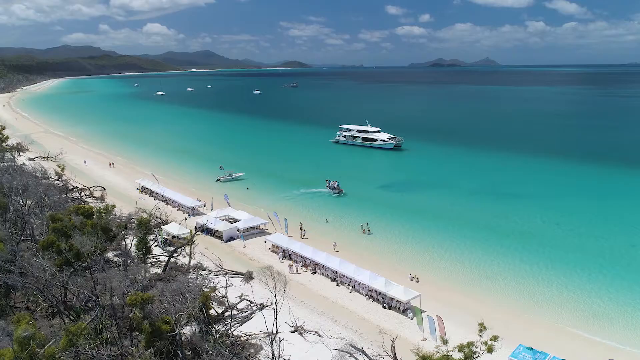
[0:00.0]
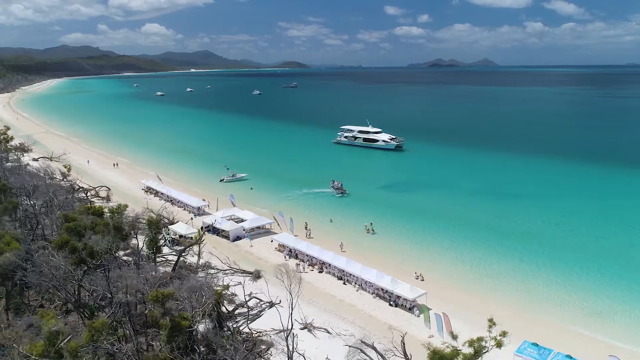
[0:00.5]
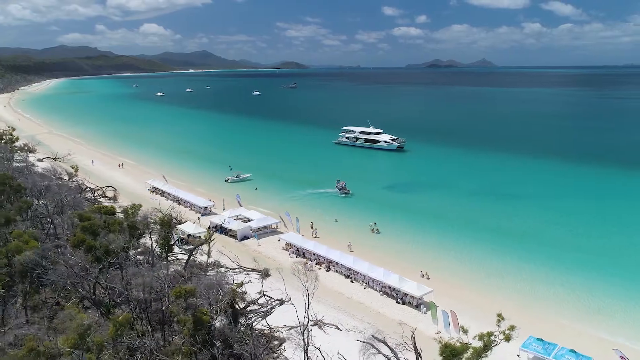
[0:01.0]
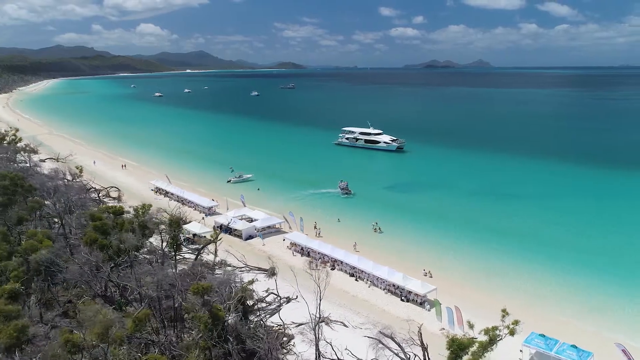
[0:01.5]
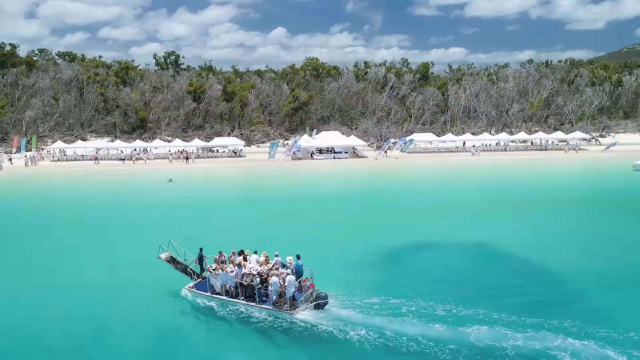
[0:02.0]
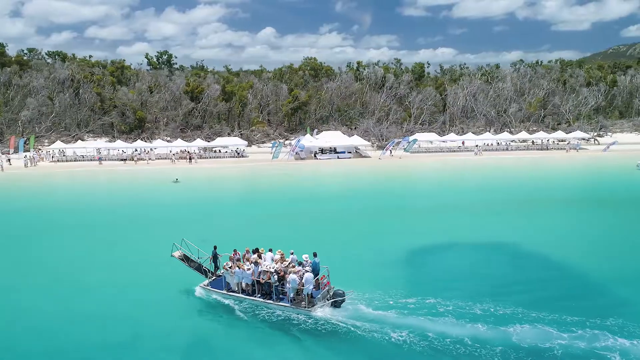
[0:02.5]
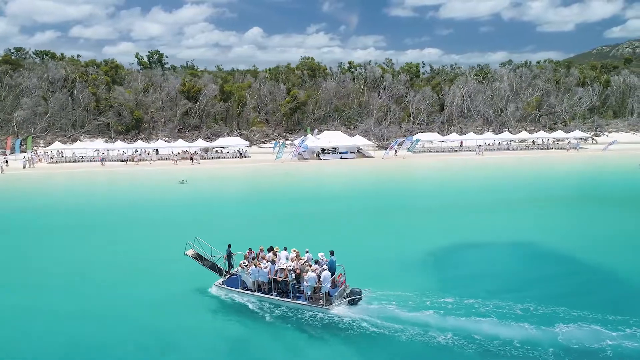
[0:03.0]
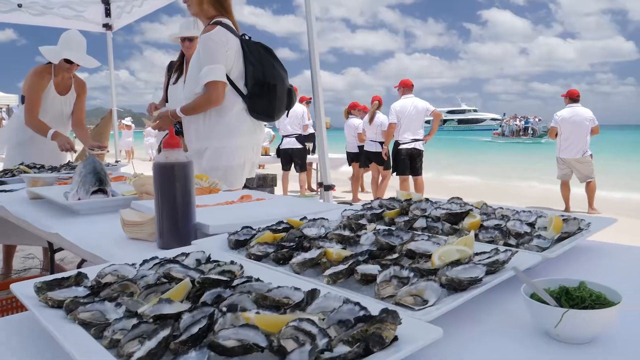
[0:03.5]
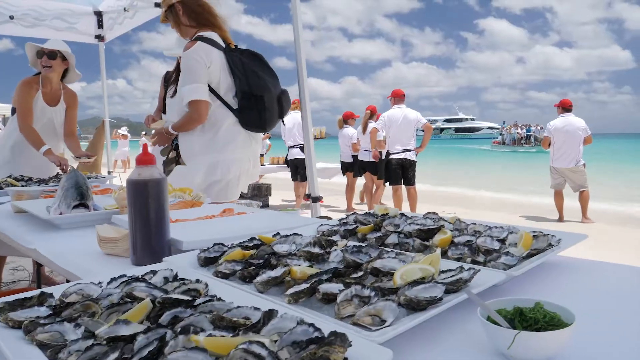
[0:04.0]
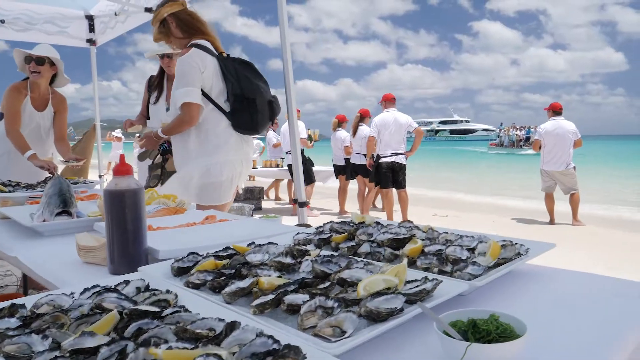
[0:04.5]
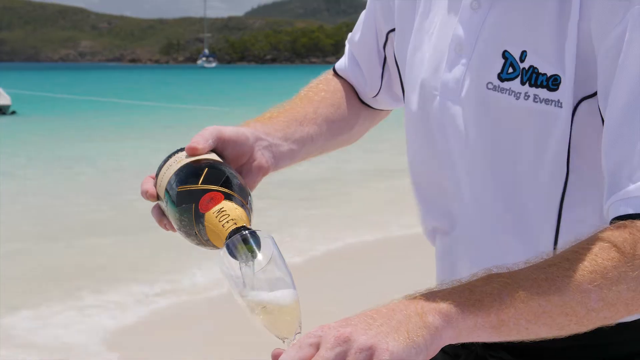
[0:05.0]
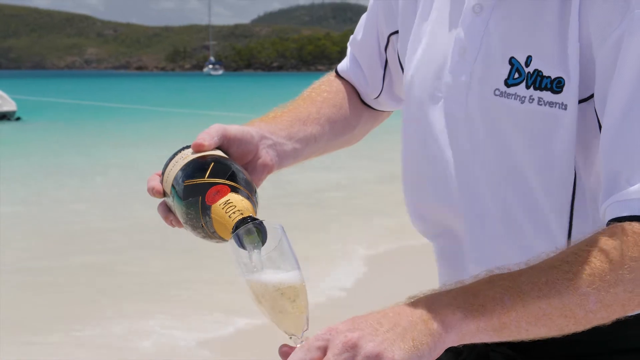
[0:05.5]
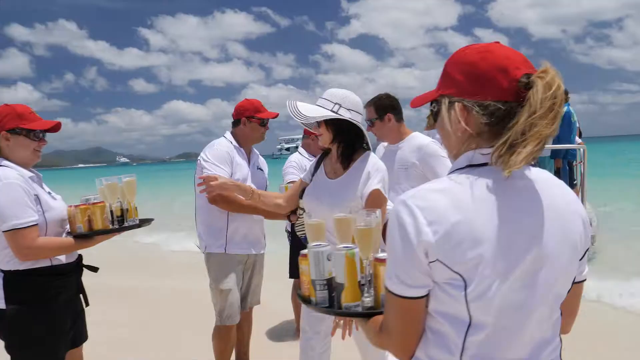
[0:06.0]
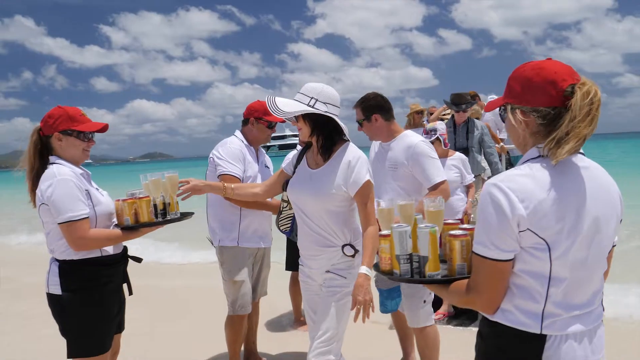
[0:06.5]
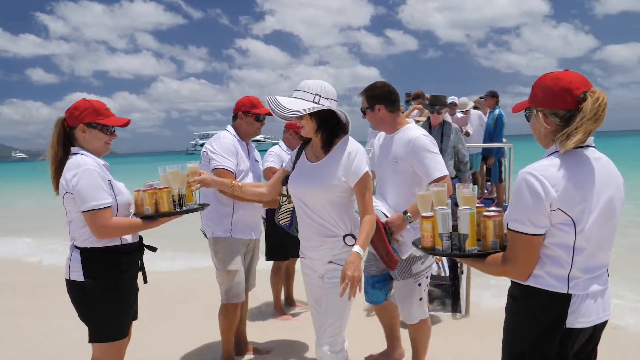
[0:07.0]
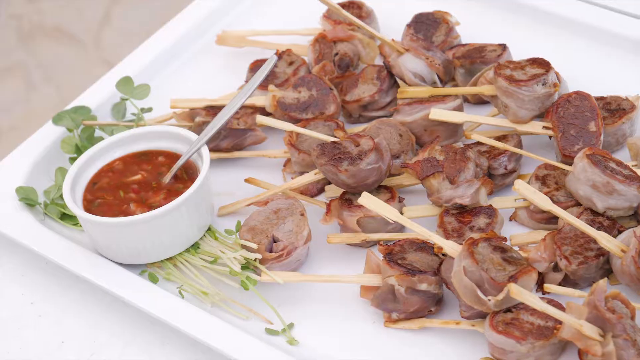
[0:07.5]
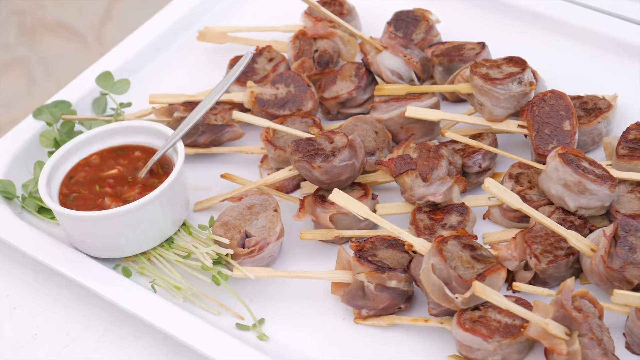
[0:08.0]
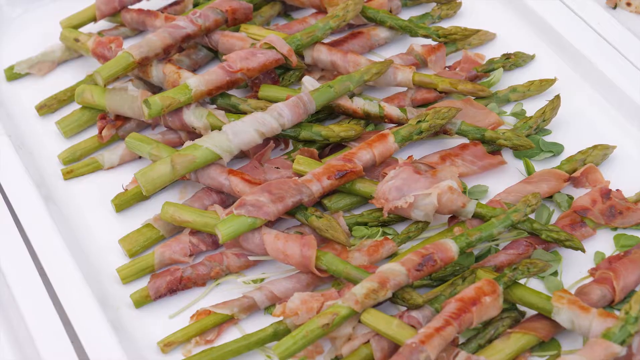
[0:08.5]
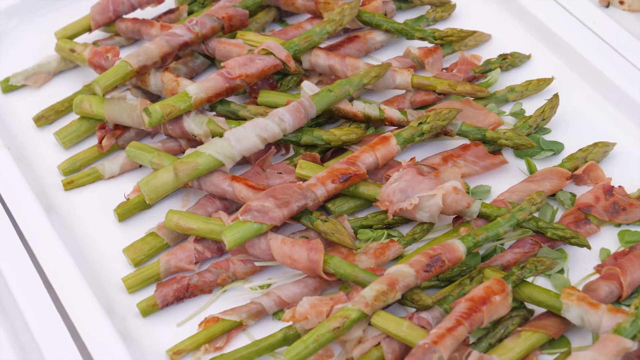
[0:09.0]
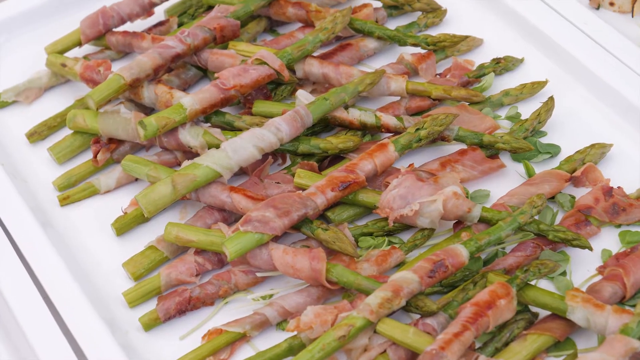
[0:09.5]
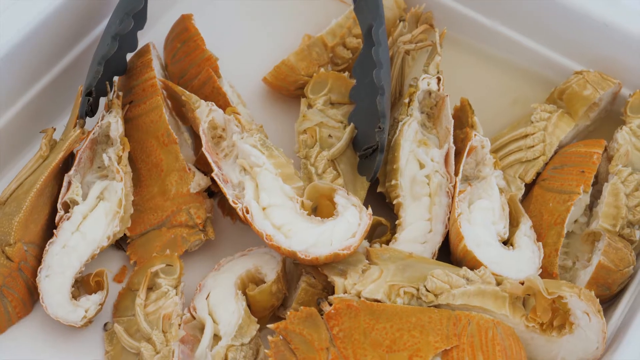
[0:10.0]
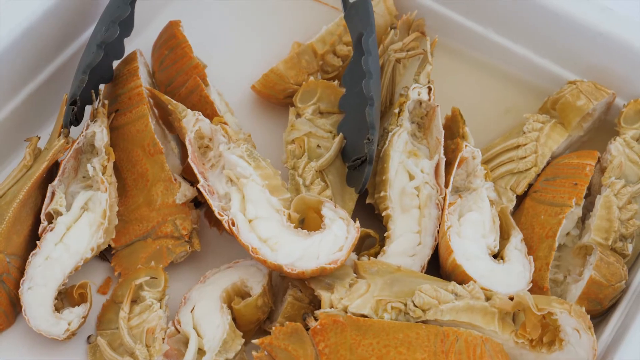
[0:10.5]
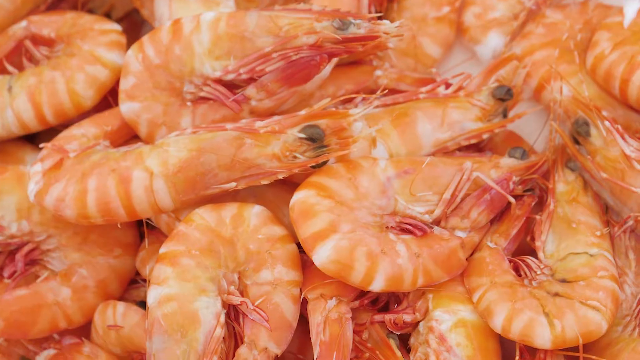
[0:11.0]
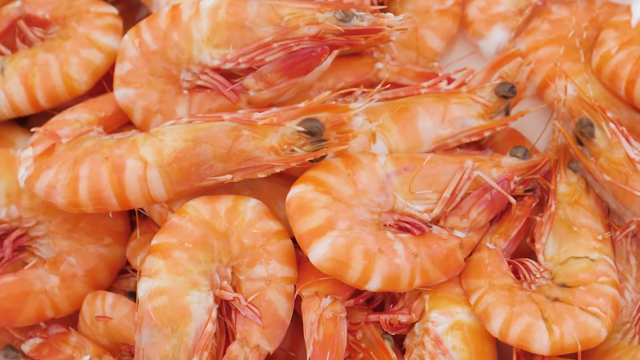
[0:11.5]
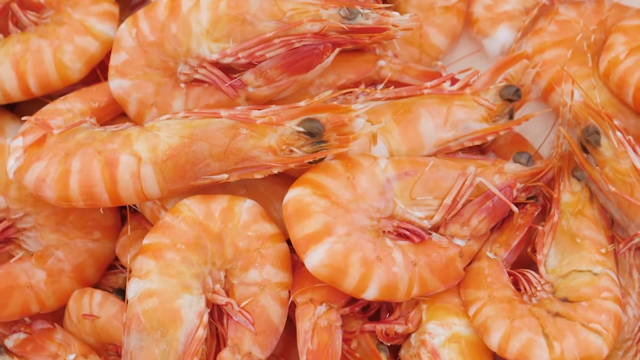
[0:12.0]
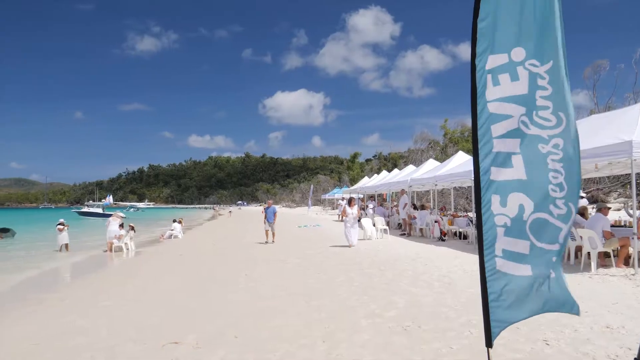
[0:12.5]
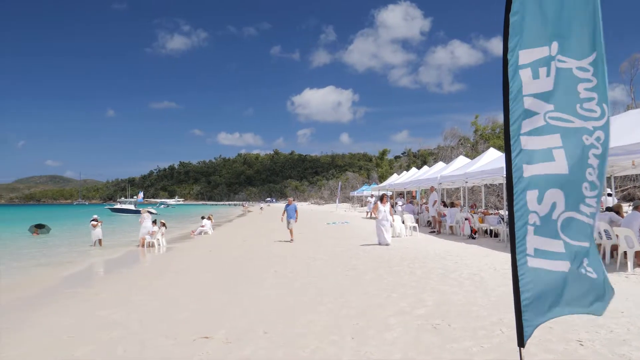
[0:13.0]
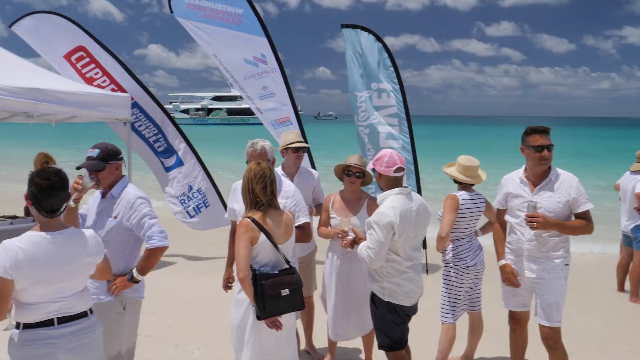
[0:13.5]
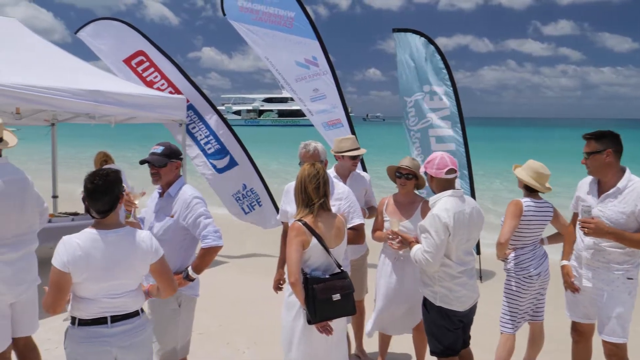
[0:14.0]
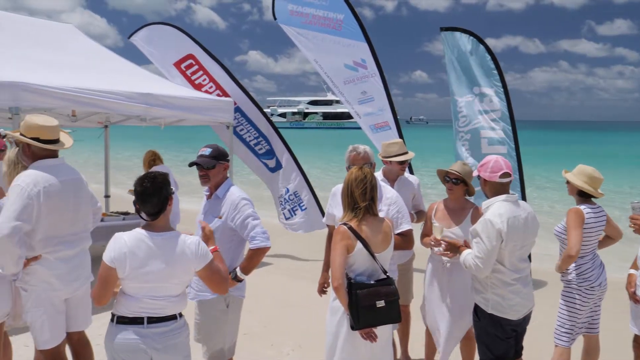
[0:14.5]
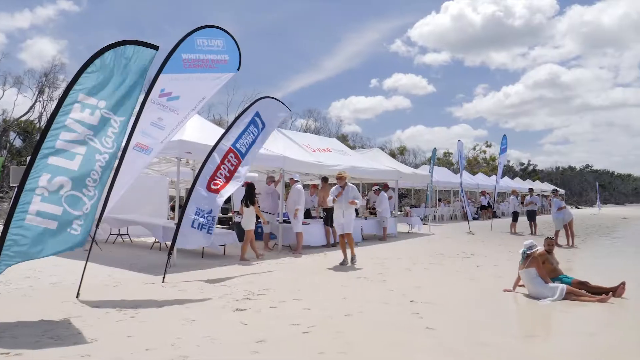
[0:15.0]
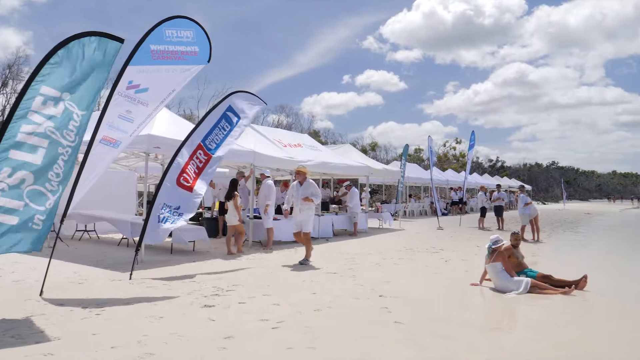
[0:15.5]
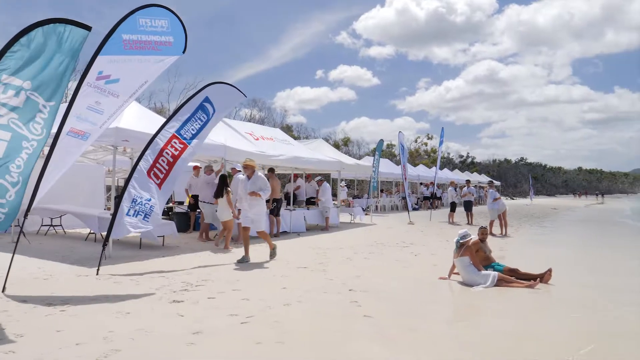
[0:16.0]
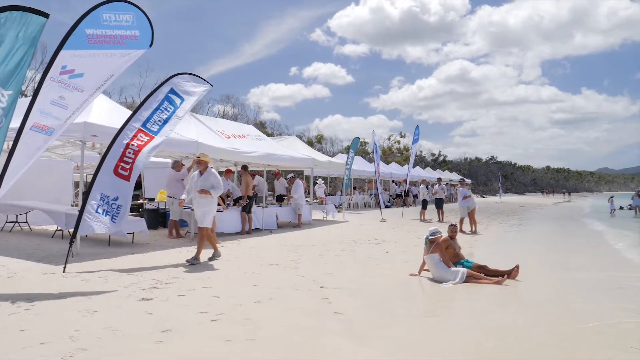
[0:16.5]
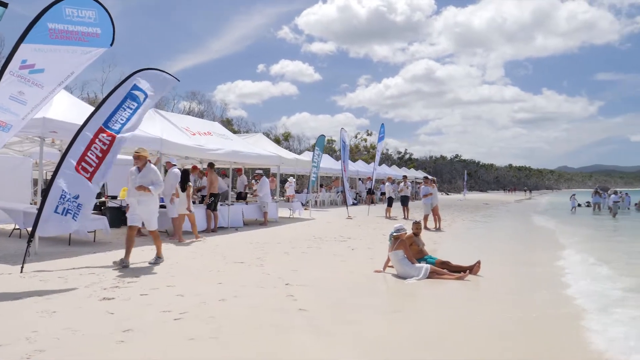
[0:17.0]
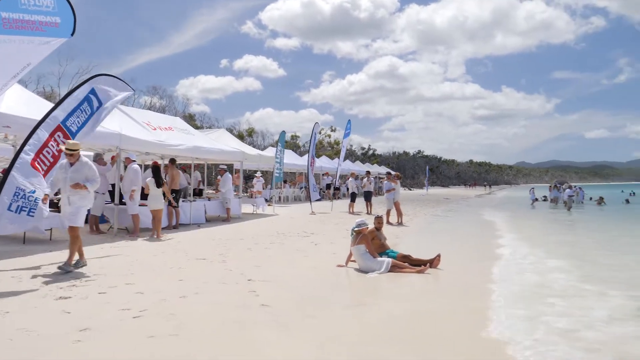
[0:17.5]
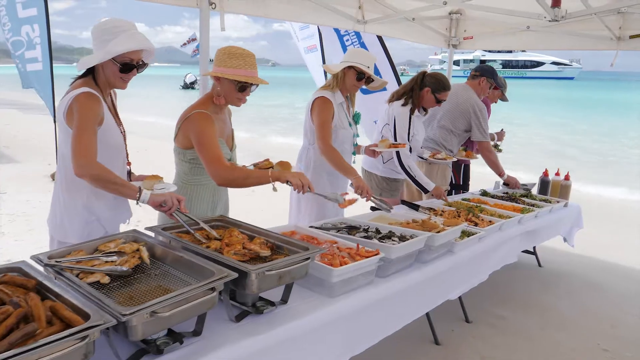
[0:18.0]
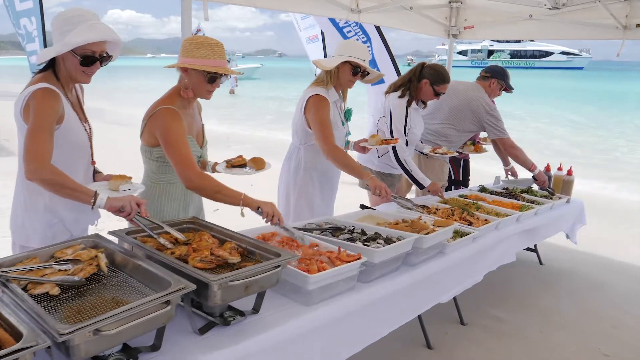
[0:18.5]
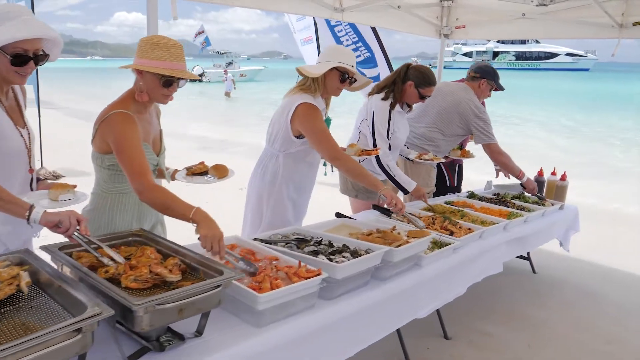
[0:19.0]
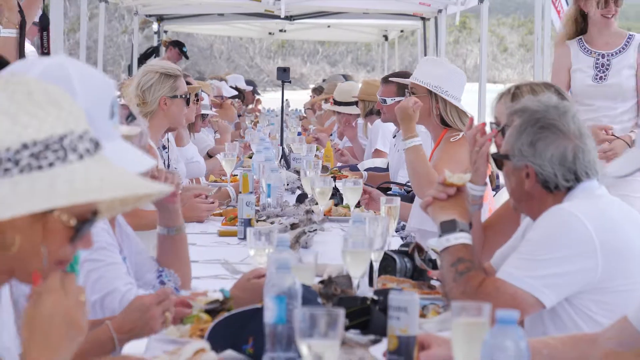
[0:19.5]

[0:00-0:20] An aerial view shows a large, expensive-looking yacht in a large, clear blue body of water next to an island beach. The video cuts to a small tender crowded with multiple people, most likely coming from the yacht, heading toward the beach. Multiple tents are set up, and there are people wearing red hats and white shirts, most likely servers or employees. Multiple plates of food are set on the tables under the tents, including raw fish and a plate full of oysters. The video then cuts to employees pouring champagne into wine glasses and holding trays with cans of what is presumably alcohol along with the wine glasses or champagne flutes. The people from the tender line up as they get off the boat, and the servers offer them champagne and cans of alcohol.